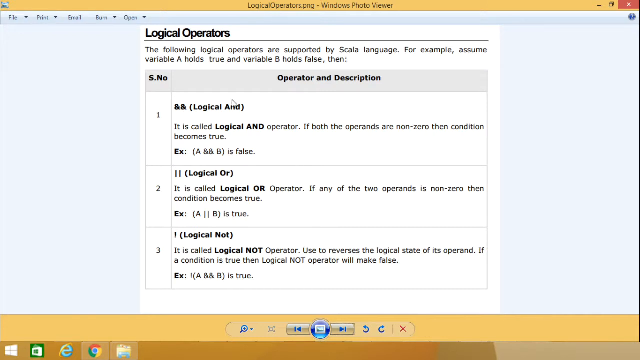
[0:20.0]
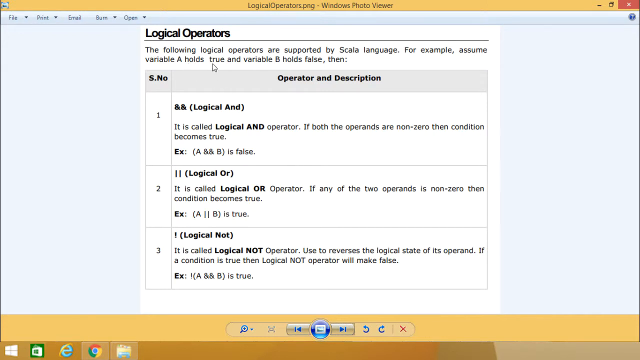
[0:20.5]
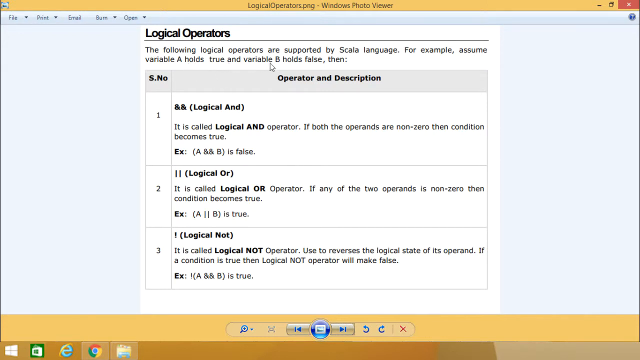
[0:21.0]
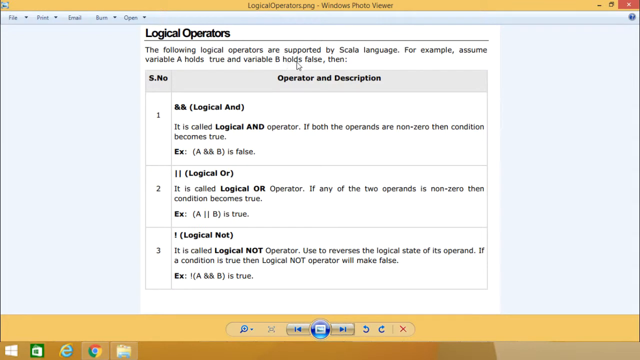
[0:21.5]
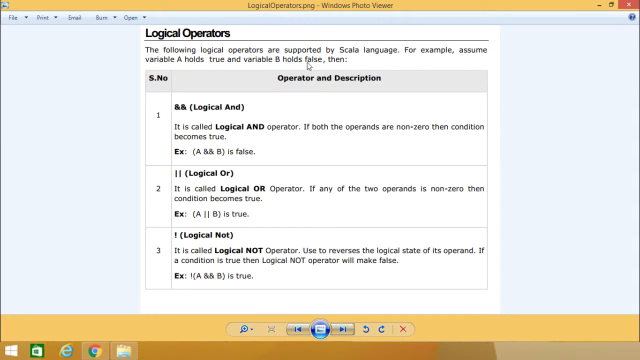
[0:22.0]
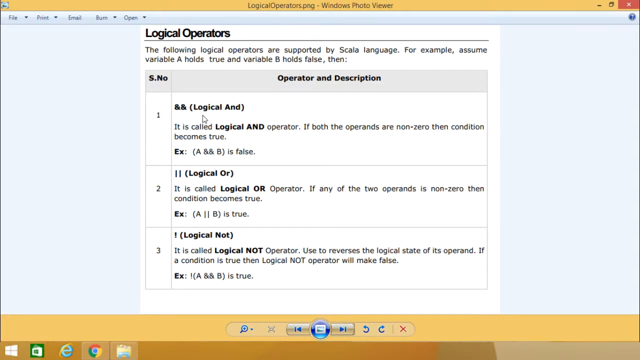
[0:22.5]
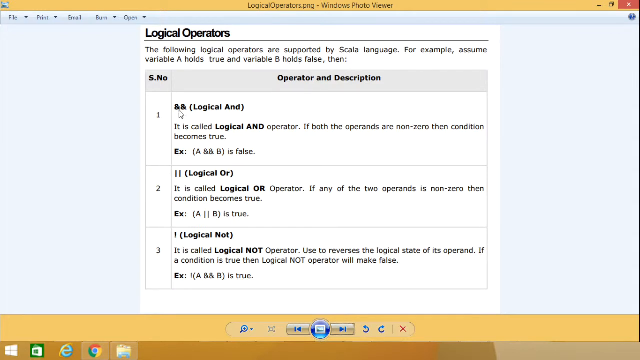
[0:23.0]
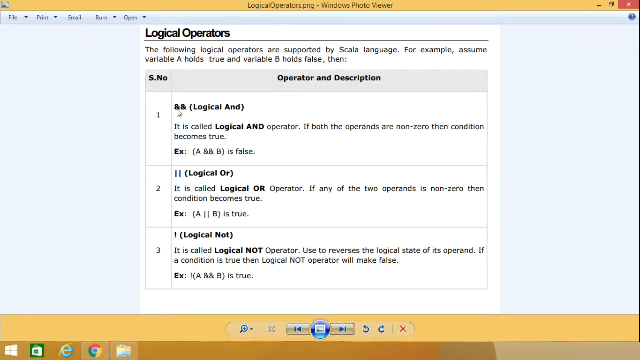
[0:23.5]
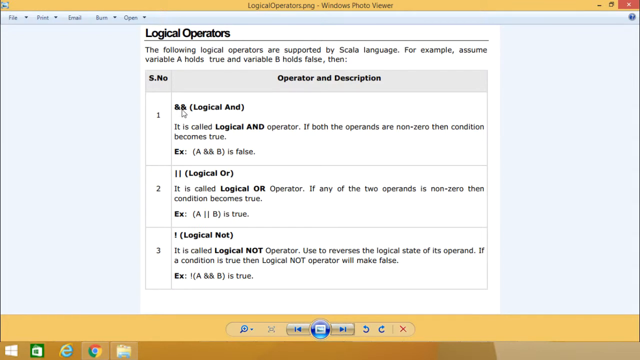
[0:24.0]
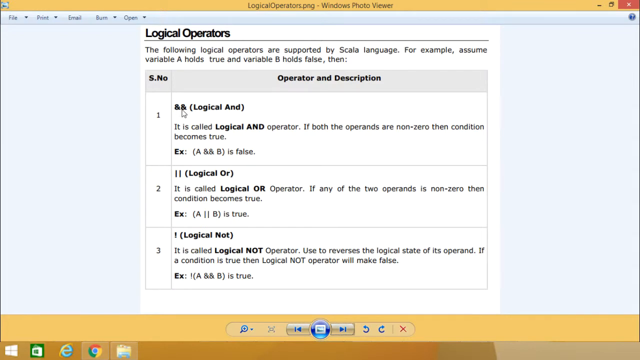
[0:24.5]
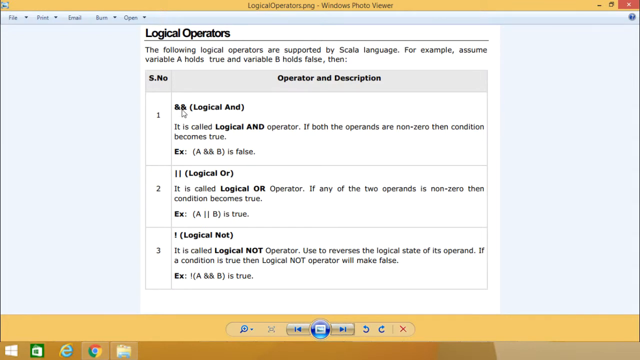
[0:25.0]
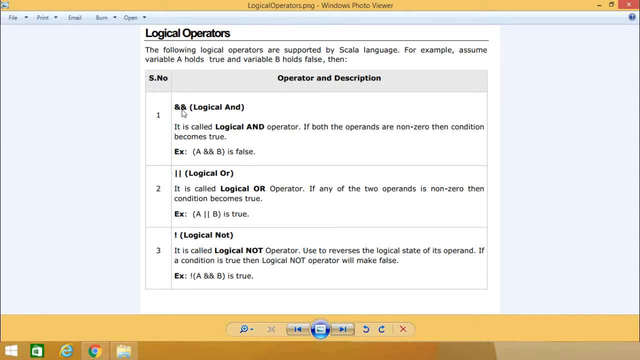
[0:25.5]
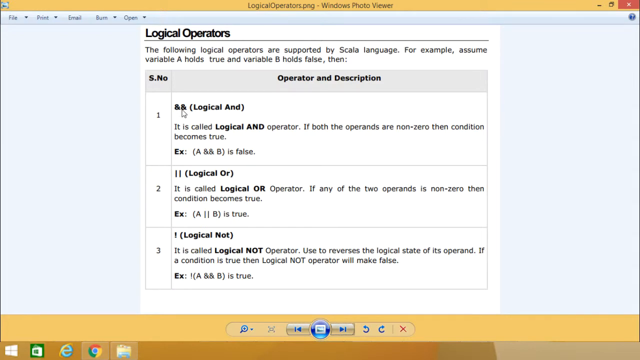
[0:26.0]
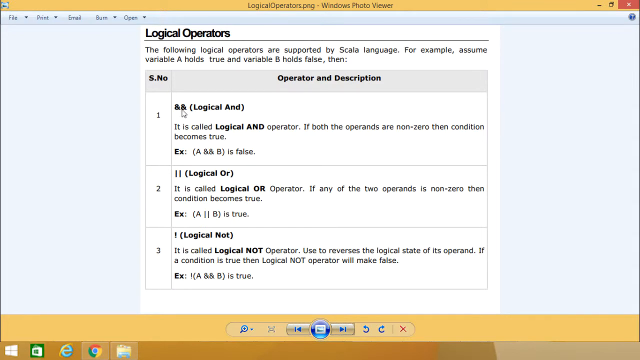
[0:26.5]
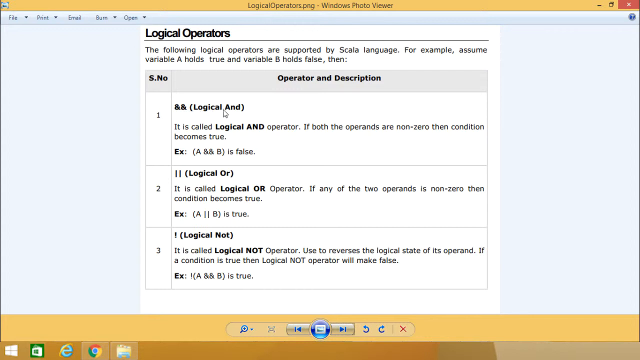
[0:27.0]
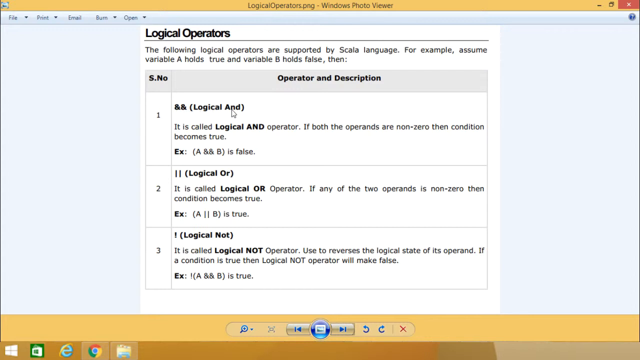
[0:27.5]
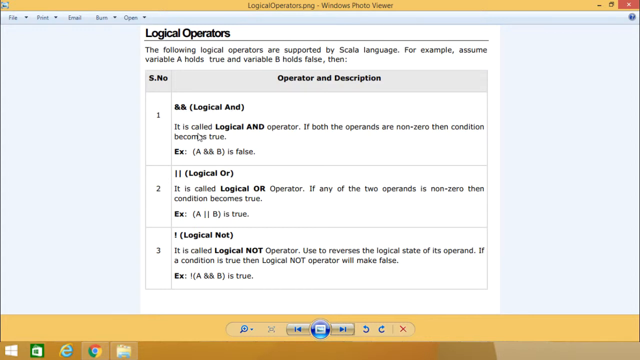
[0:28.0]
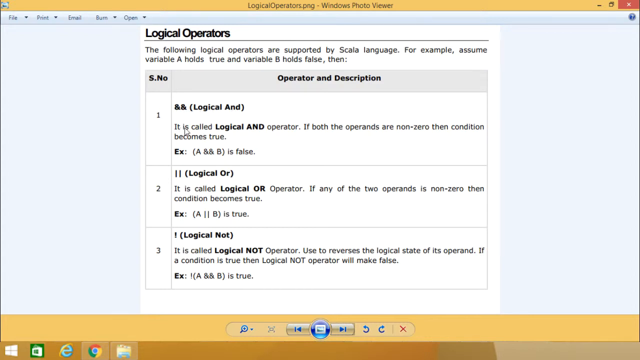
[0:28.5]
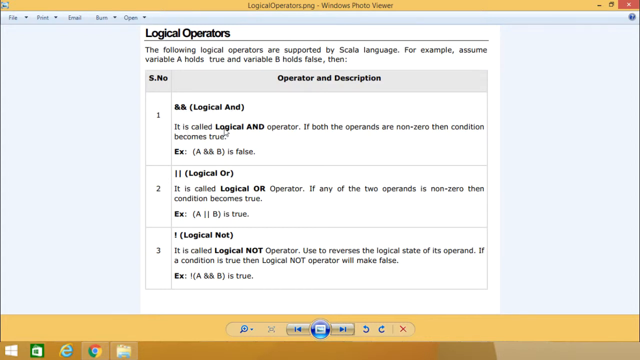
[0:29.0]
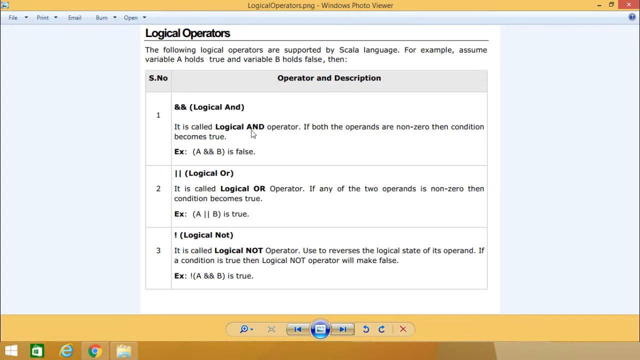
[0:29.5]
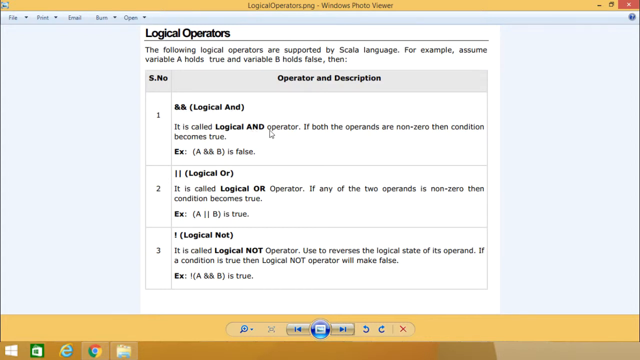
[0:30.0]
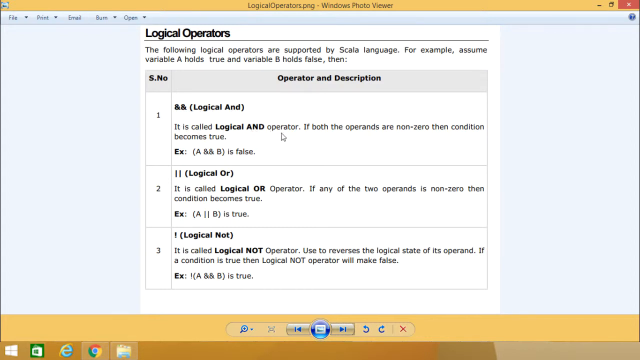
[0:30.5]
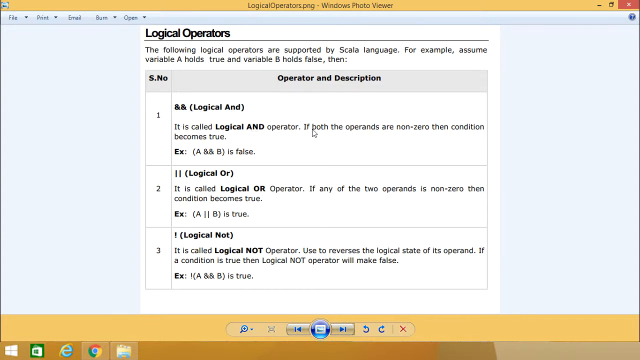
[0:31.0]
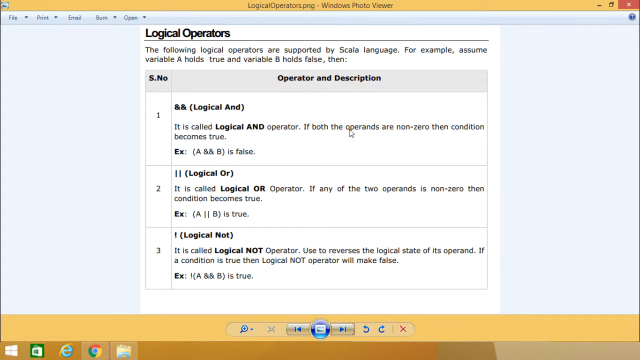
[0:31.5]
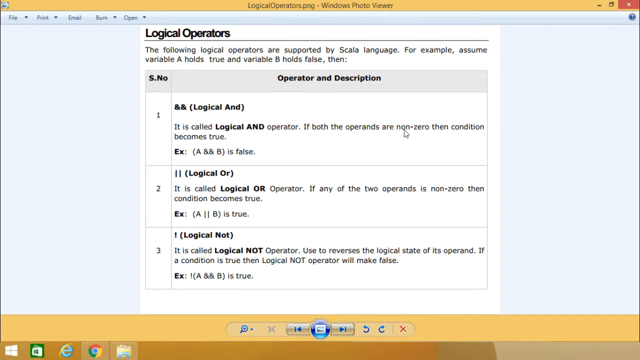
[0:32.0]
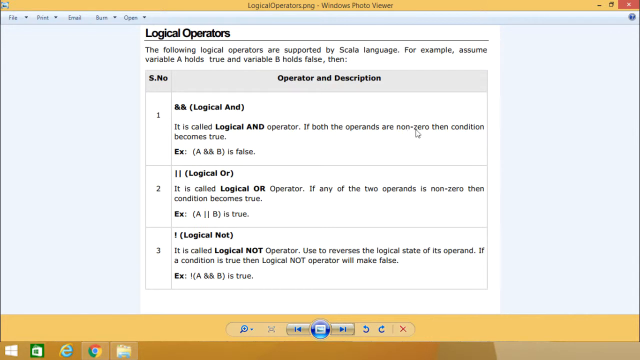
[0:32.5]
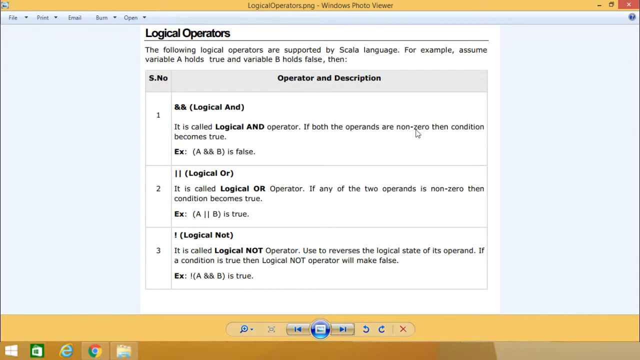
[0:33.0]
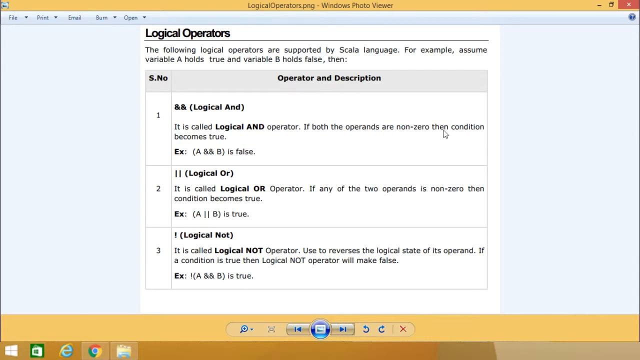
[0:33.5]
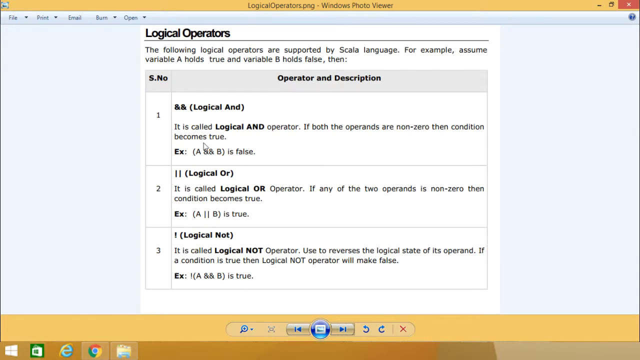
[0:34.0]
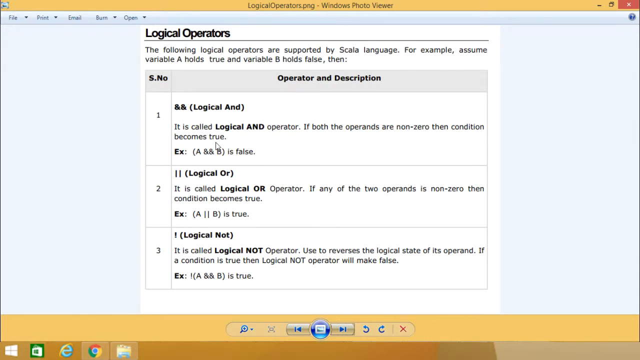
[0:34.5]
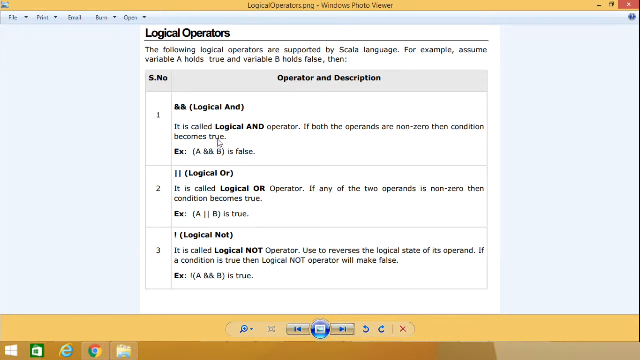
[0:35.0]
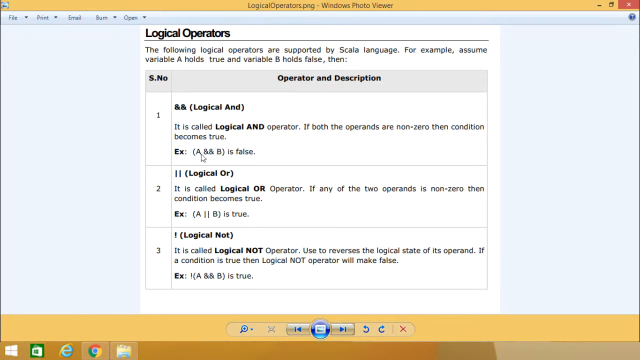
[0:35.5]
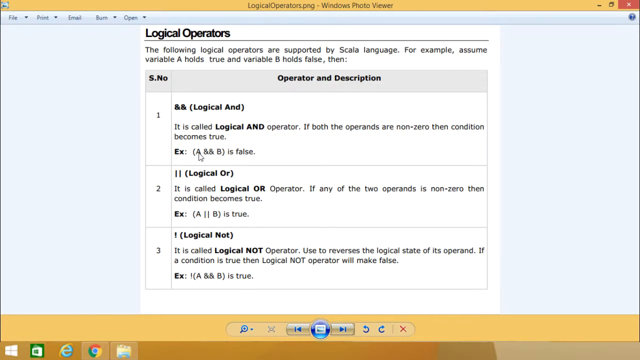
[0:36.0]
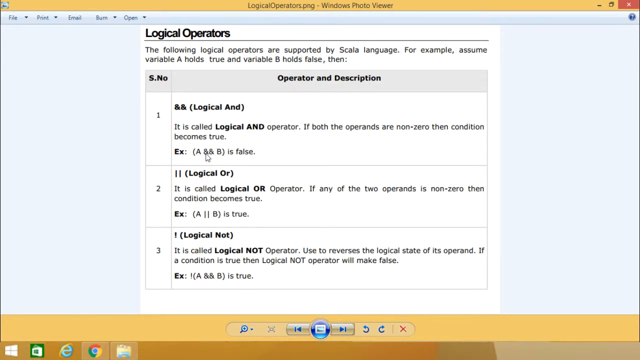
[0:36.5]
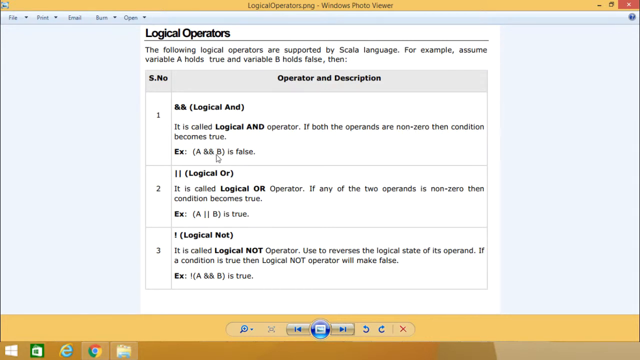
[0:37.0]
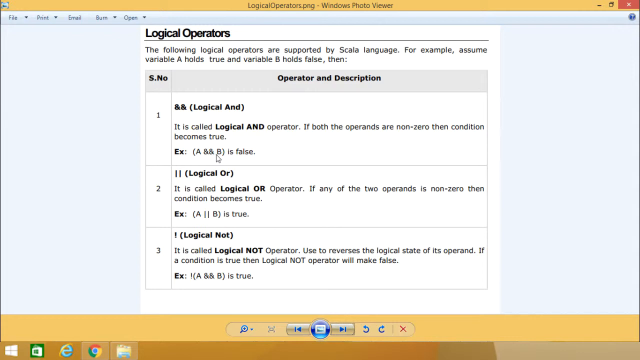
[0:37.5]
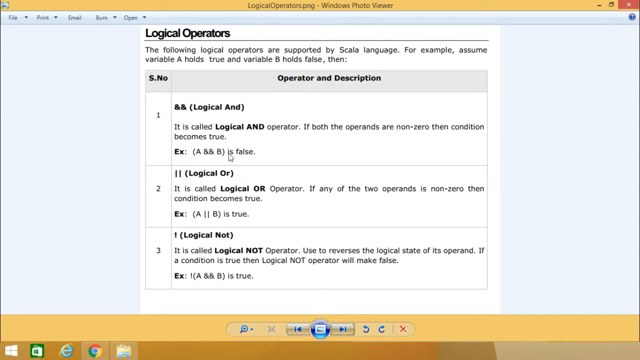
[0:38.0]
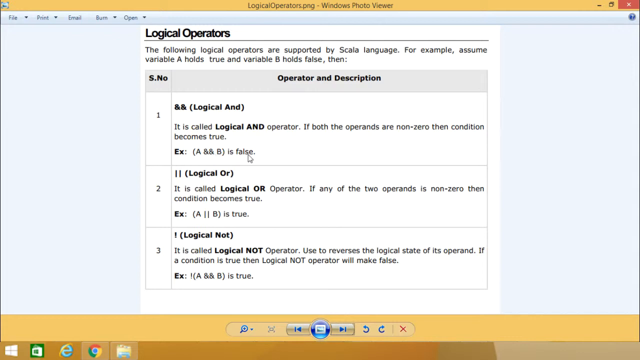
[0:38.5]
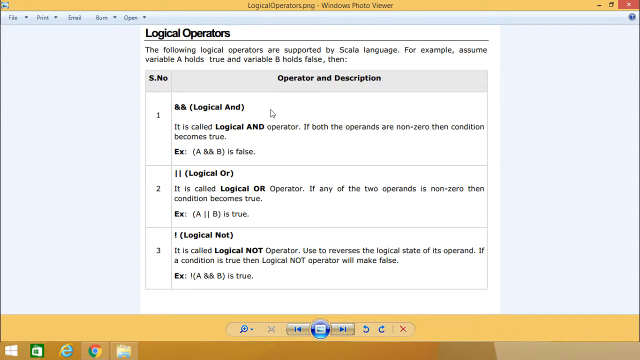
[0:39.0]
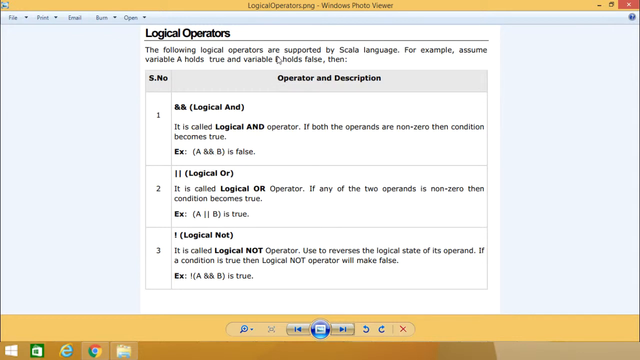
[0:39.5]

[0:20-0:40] The Tutorials Point, Simply Easy Learning tutorial on Scala basics using logical operators covers the first logical operator, the logical and operator, represented by the and sign typed twice. Its description states that if both operands are non-zero, the condition becomes true, and the example shows that A logical and B is false.